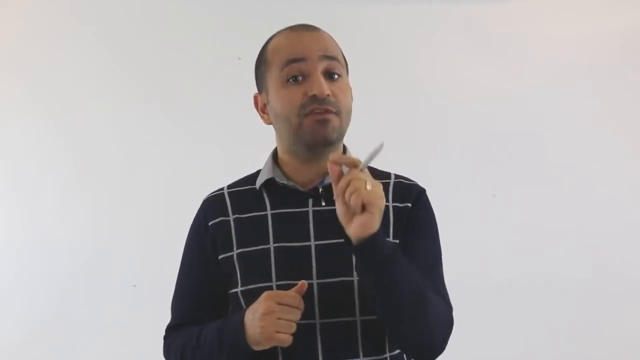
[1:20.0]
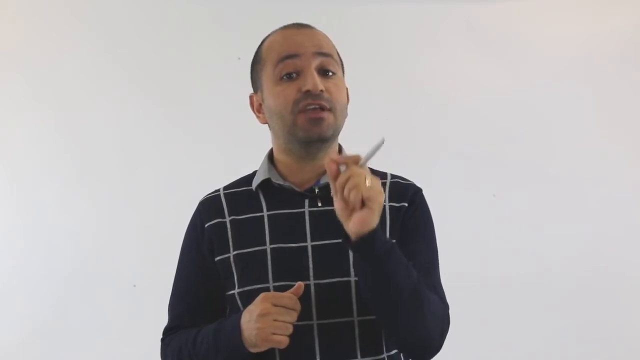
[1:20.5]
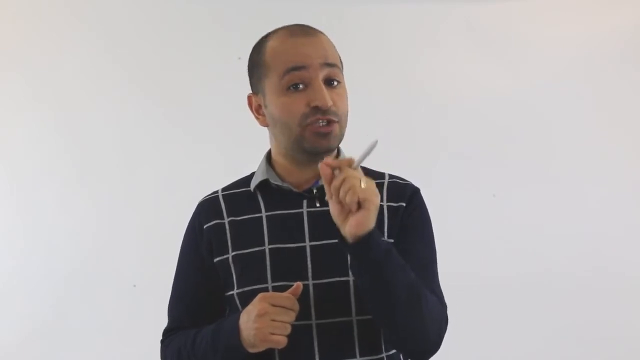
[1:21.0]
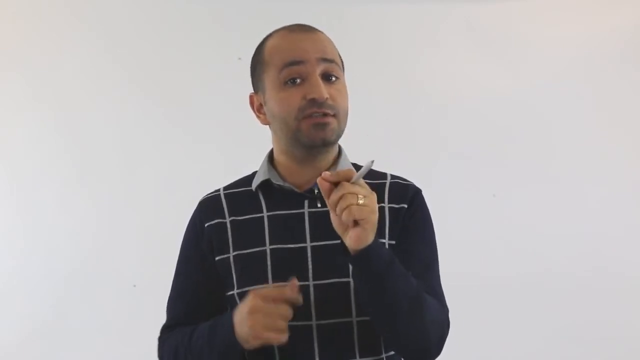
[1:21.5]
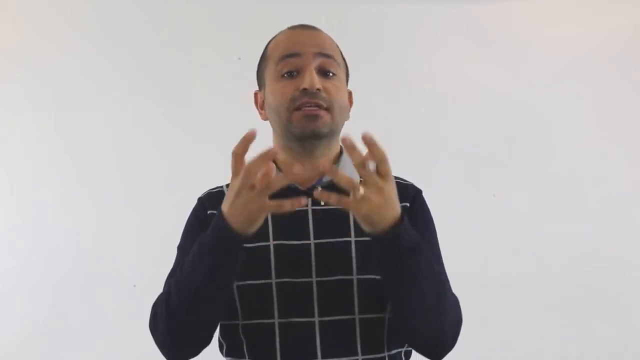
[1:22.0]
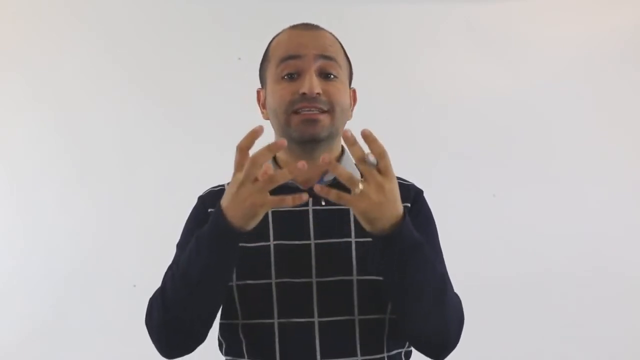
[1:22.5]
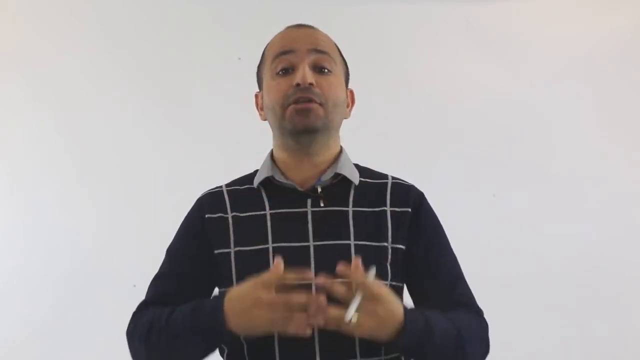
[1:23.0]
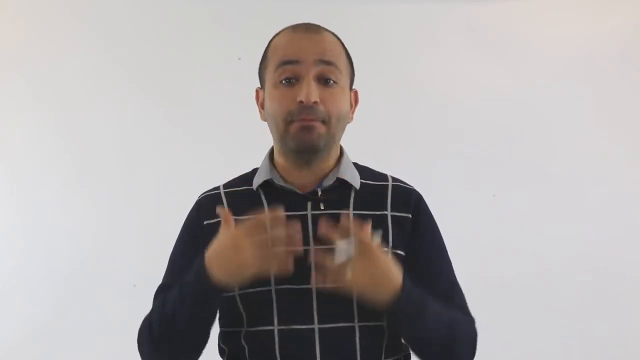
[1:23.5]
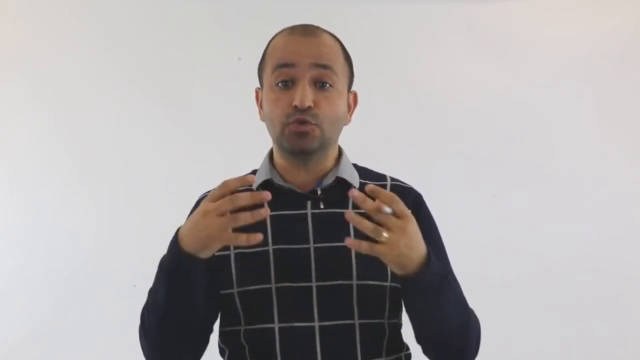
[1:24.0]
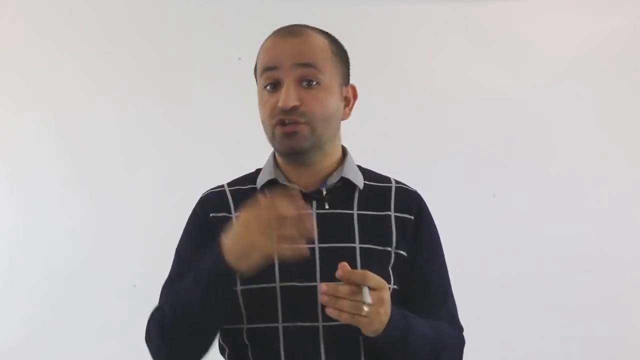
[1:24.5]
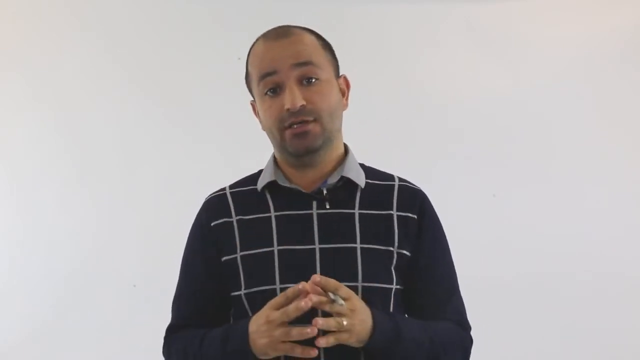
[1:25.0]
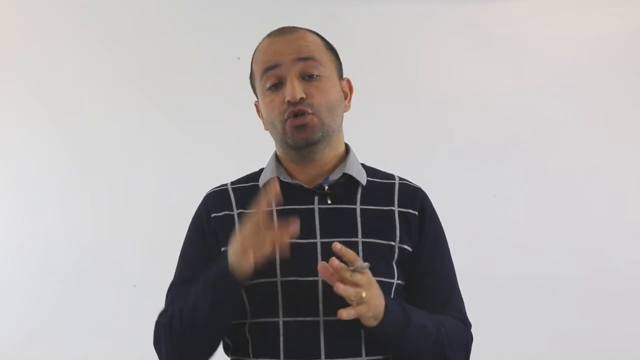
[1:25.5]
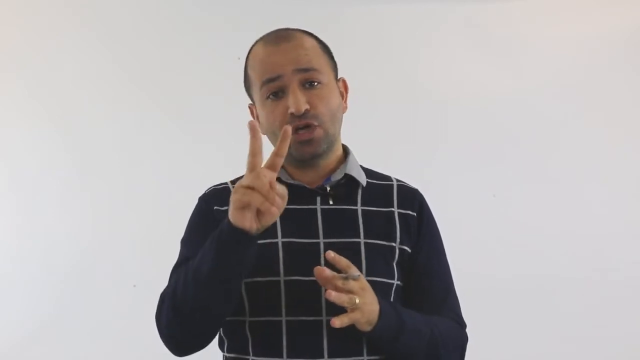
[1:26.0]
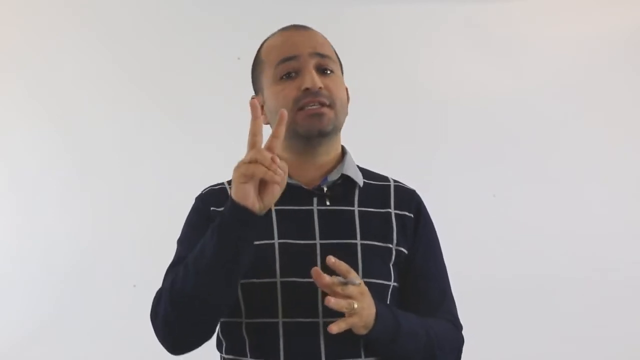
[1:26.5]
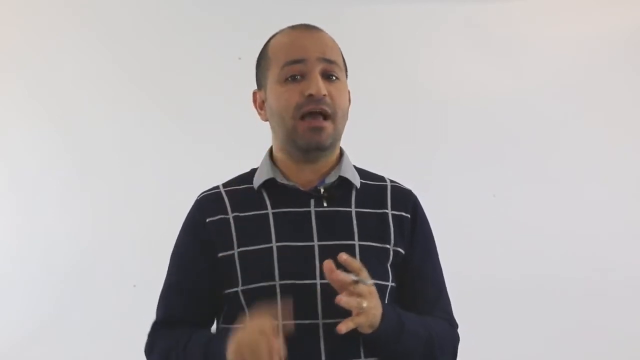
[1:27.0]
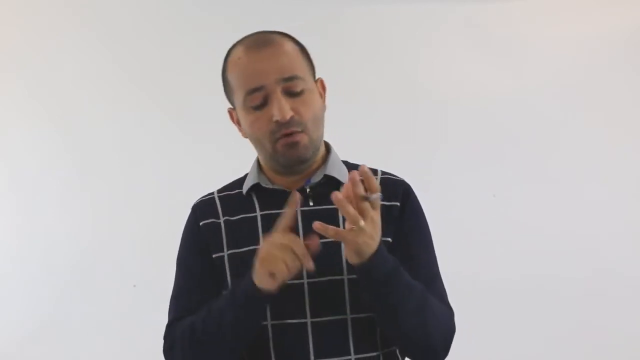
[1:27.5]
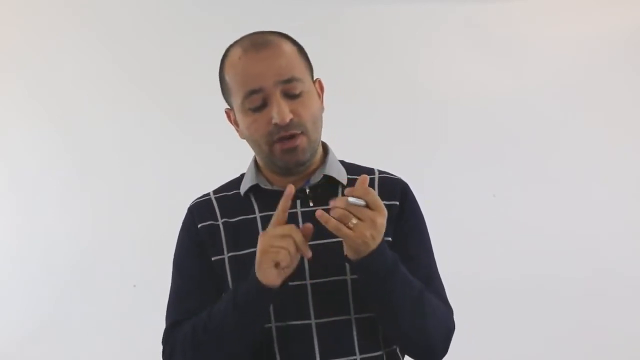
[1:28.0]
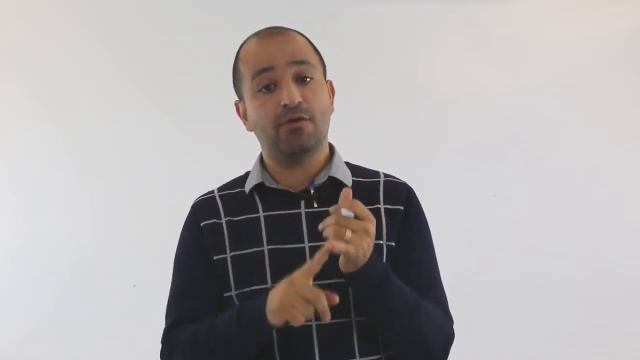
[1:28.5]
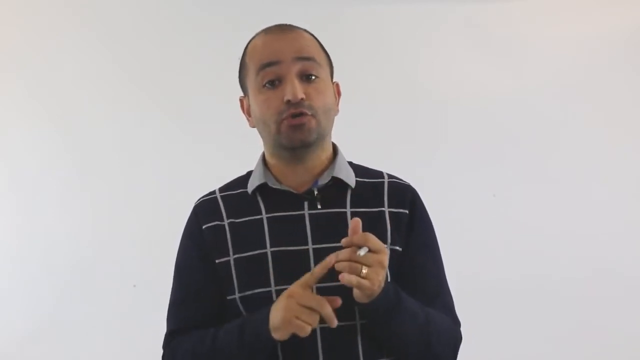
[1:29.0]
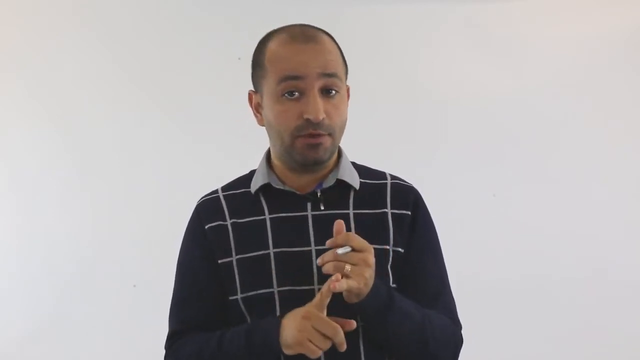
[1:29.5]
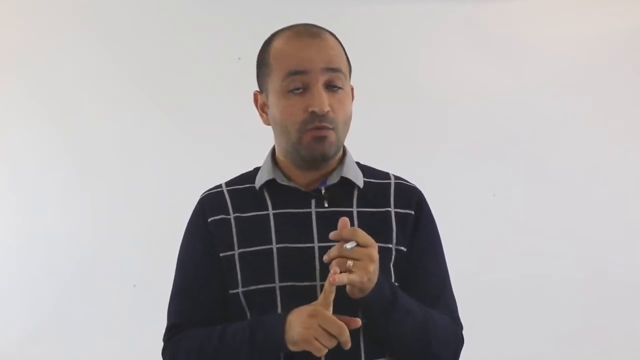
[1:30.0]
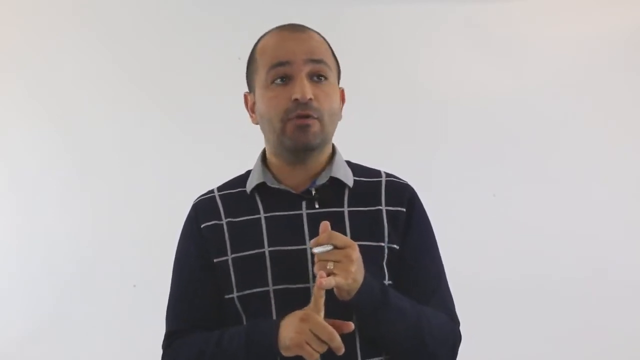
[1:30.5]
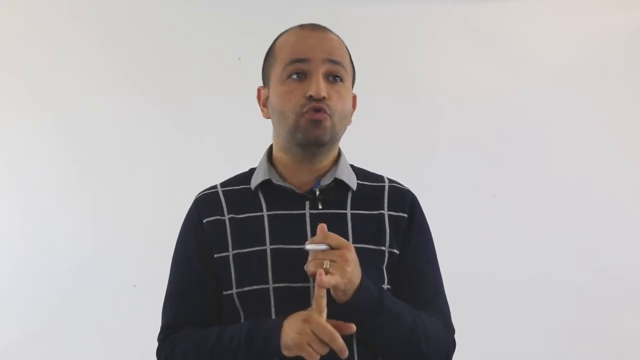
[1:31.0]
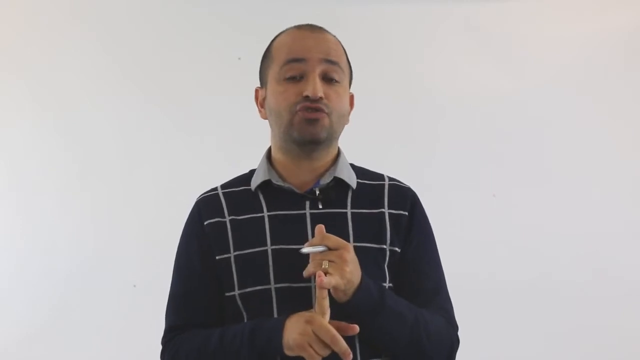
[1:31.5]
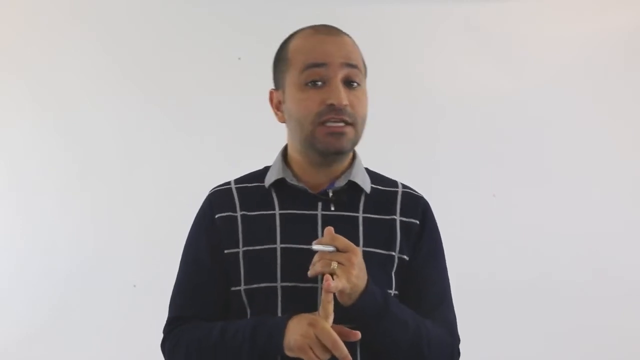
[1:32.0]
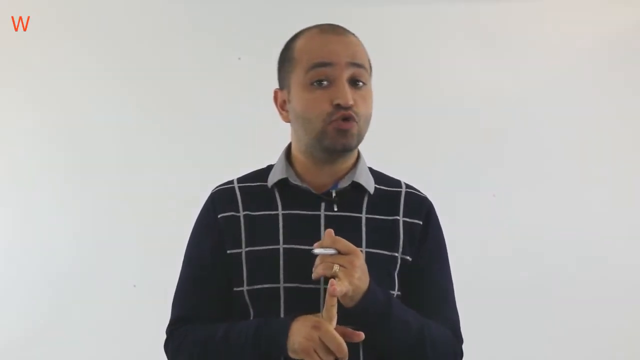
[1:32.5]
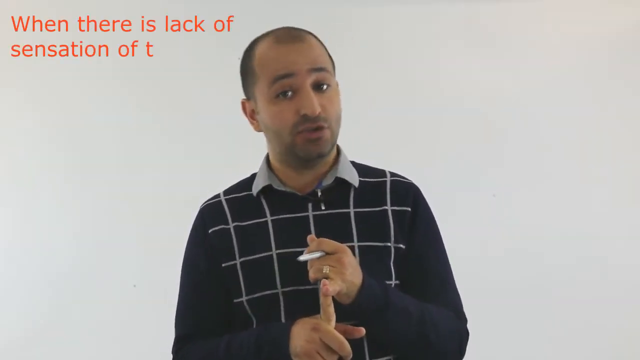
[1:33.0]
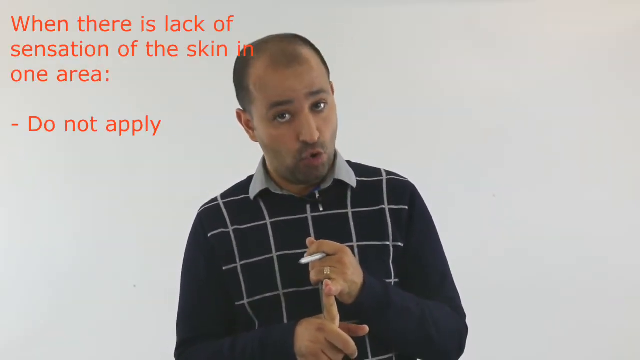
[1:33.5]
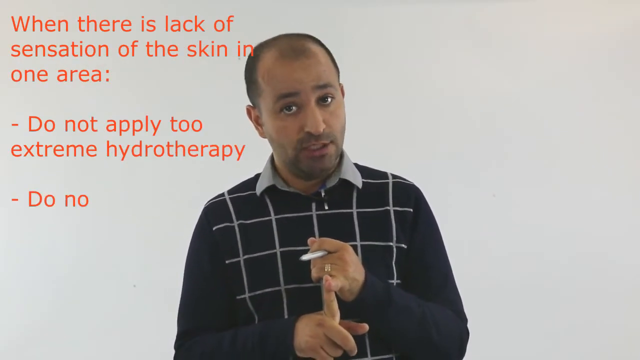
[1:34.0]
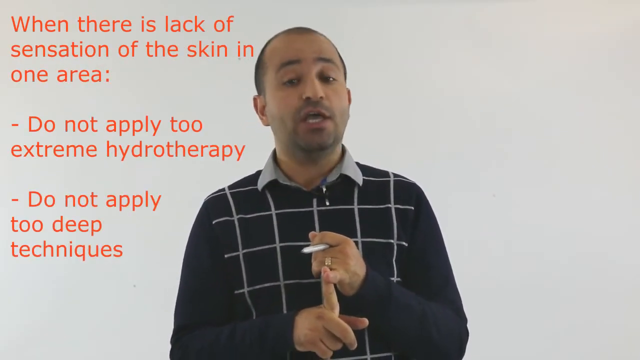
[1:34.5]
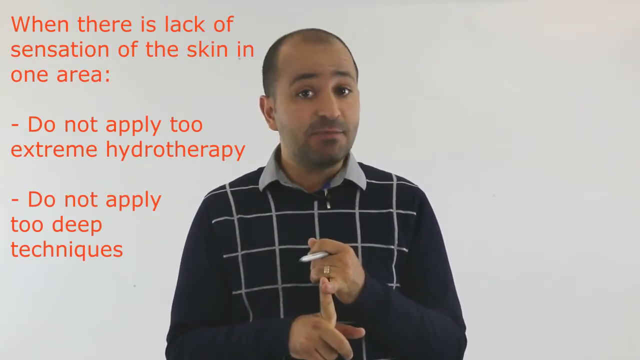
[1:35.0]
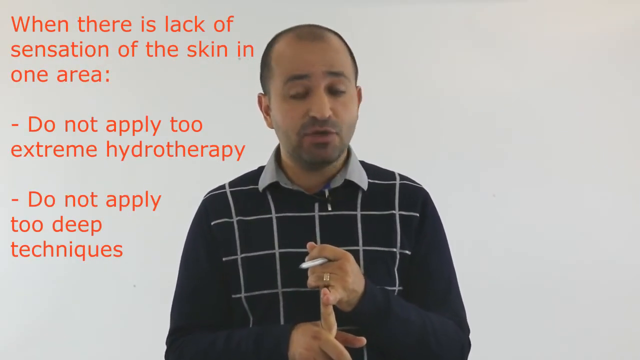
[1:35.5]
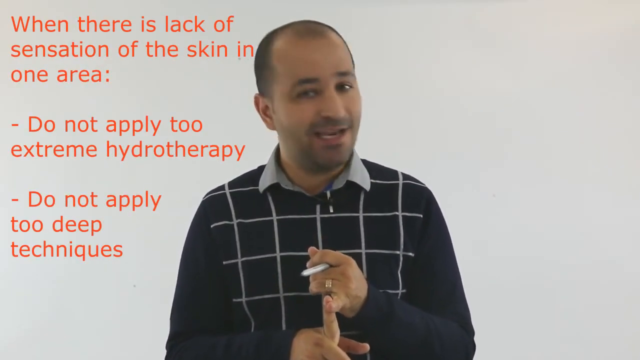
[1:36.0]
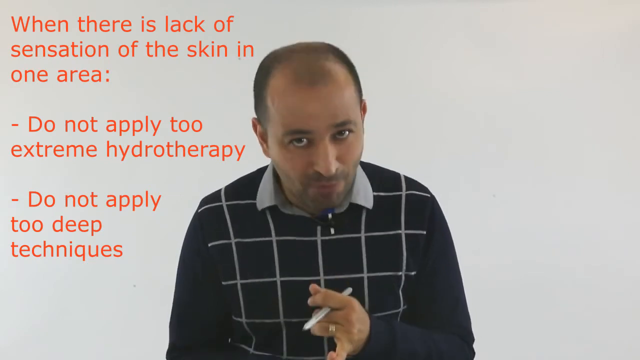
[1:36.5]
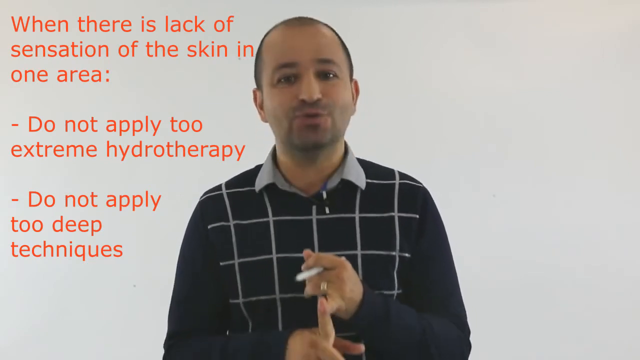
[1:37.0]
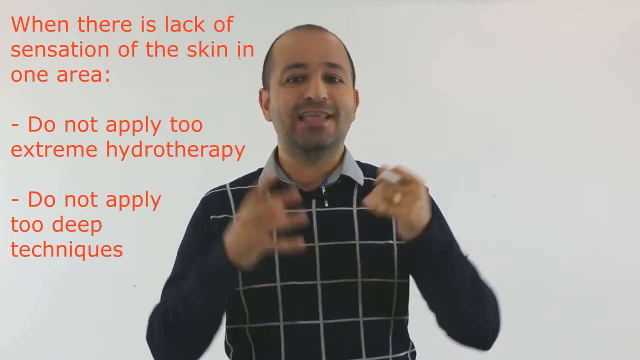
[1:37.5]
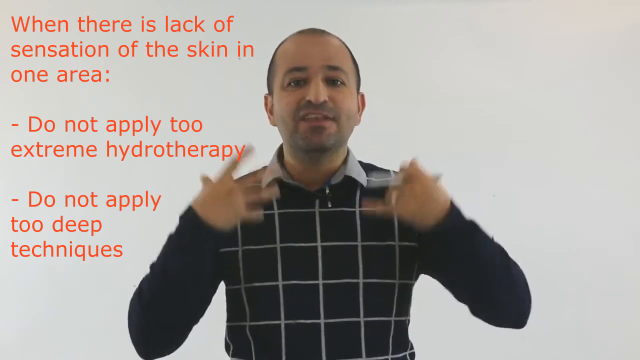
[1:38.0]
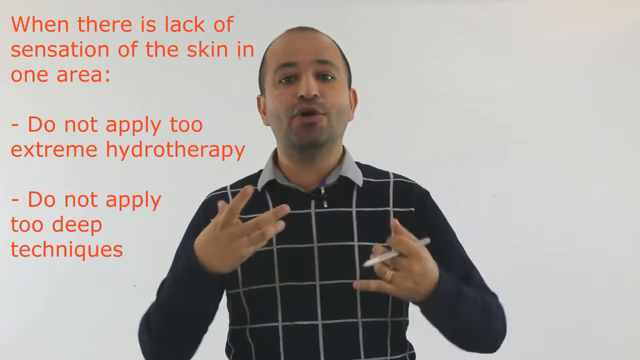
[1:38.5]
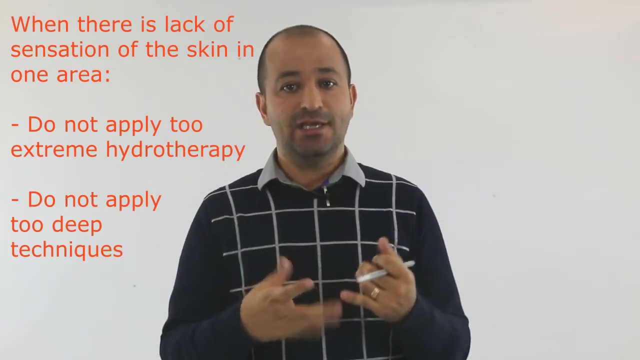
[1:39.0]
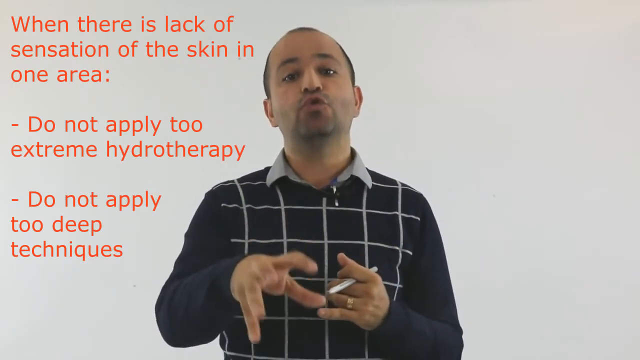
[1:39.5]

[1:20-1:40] The Middle Eastern man talks directly to the camera. He wears a black checkered sweater over a gray button-up shirt and no glasses, and has kind of thinning black hair, which he shaves. He stands in front of a white background, talking with his hands, holding a pen in his left hand, and wears a wedding ring on his left ring finger. Red text appears on the screen reading "when there is a lack of sensation of the skin in one area, do not apply too extreme hydrotherapy" and "do not apply too deep techniques." The text gives some context for the earlier question, but no answer choice, A, B, C or D, has been identified as correct.